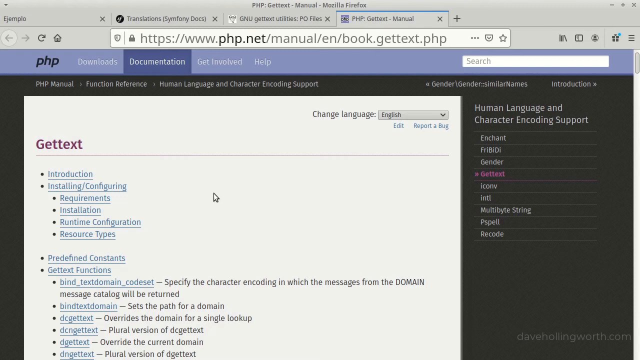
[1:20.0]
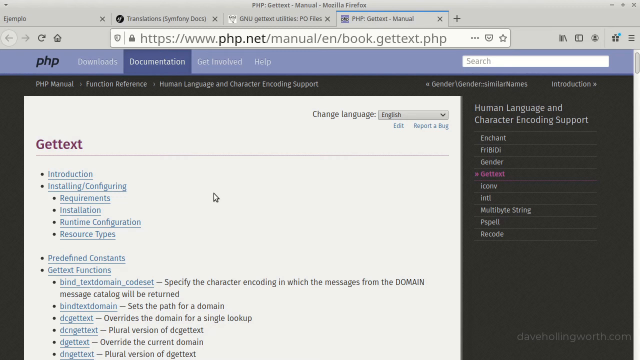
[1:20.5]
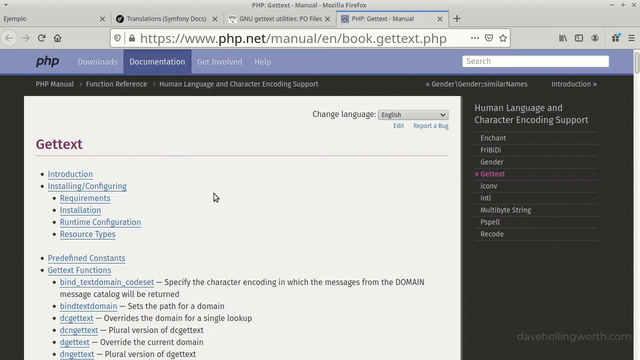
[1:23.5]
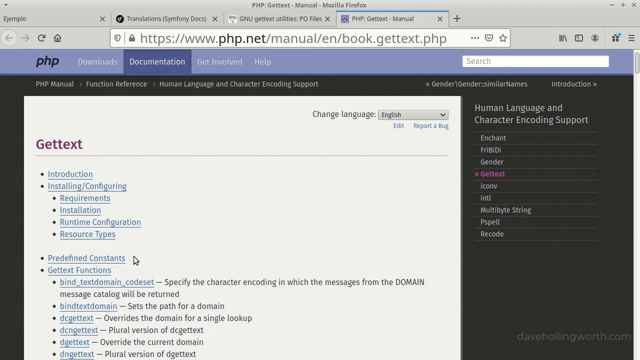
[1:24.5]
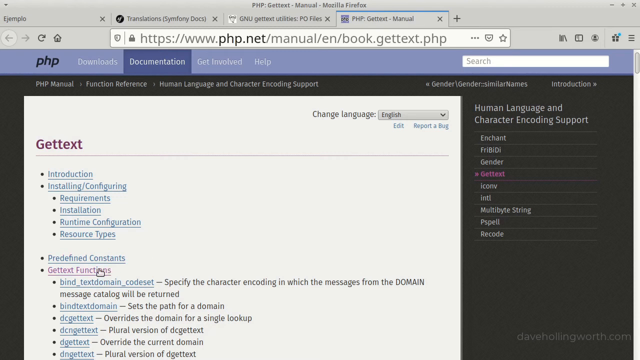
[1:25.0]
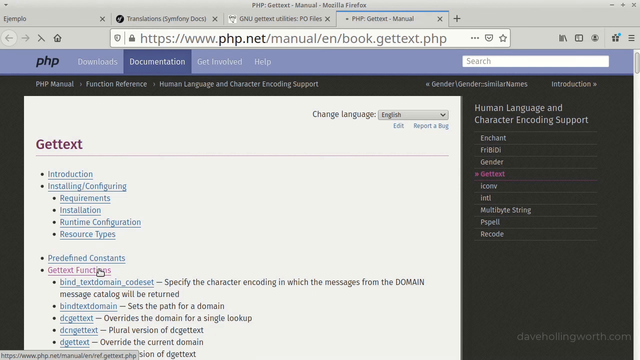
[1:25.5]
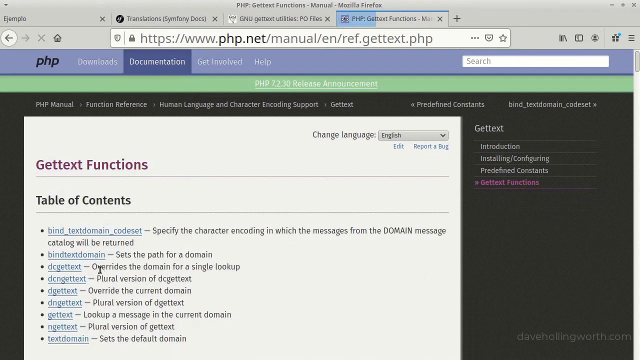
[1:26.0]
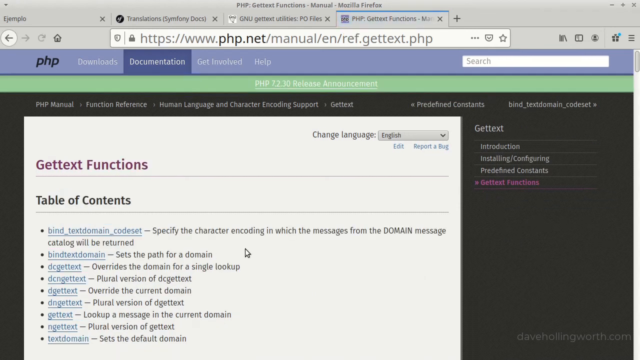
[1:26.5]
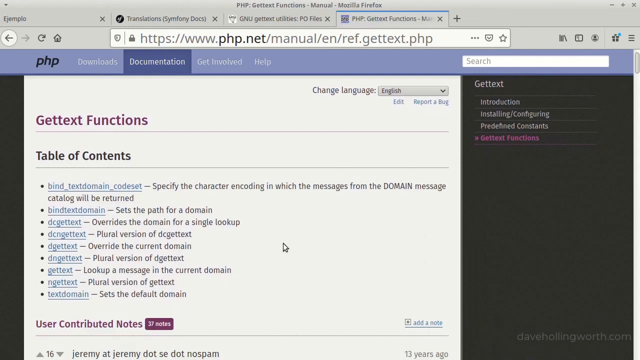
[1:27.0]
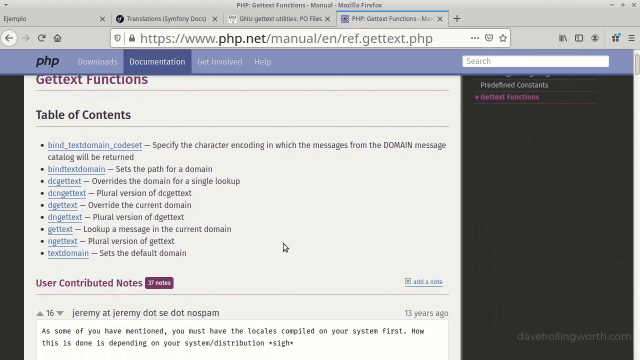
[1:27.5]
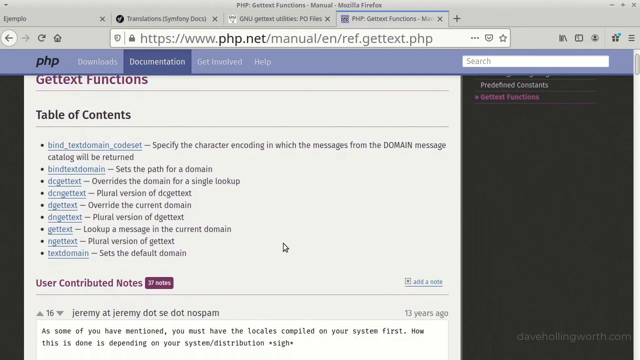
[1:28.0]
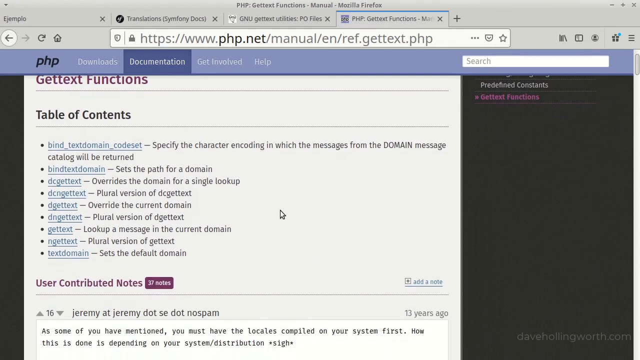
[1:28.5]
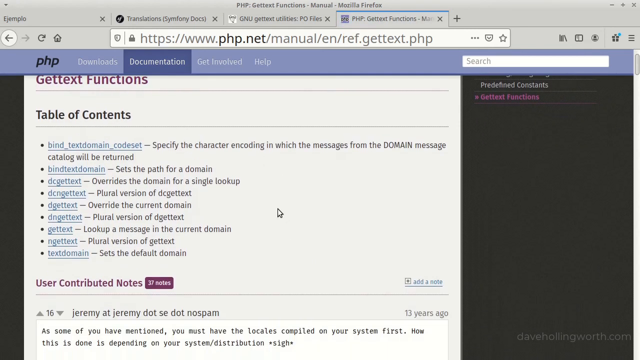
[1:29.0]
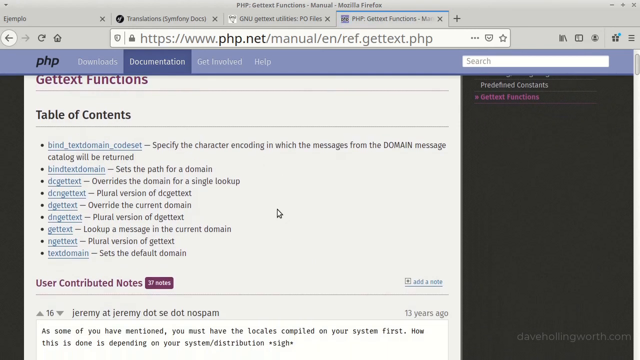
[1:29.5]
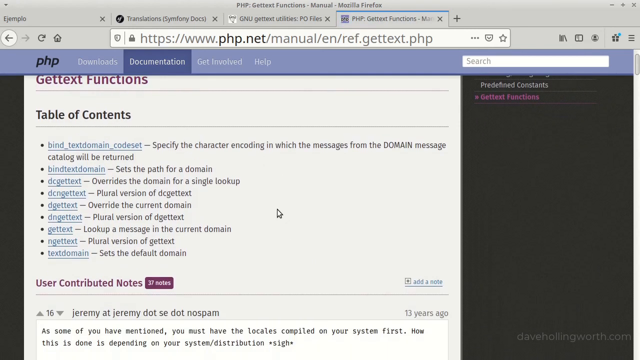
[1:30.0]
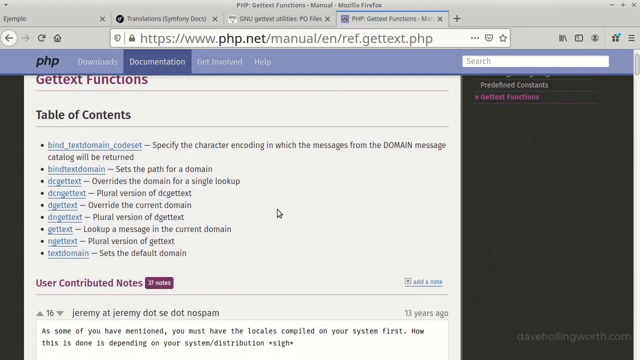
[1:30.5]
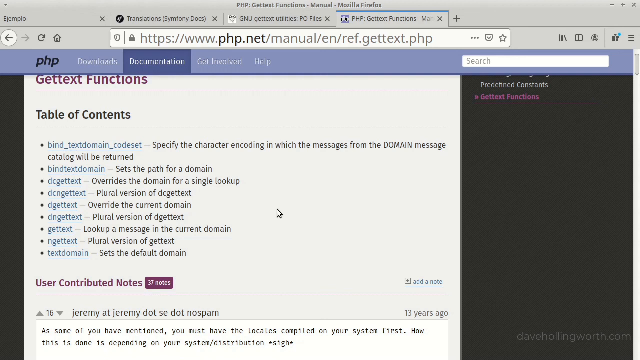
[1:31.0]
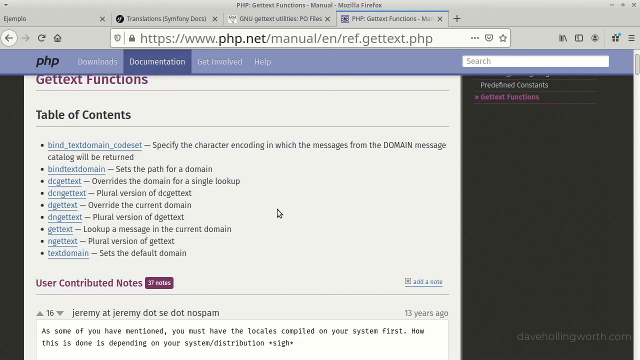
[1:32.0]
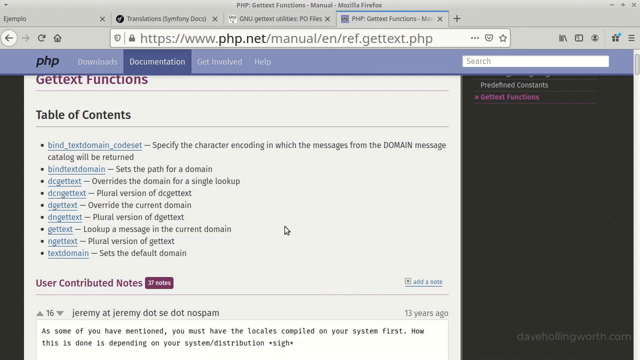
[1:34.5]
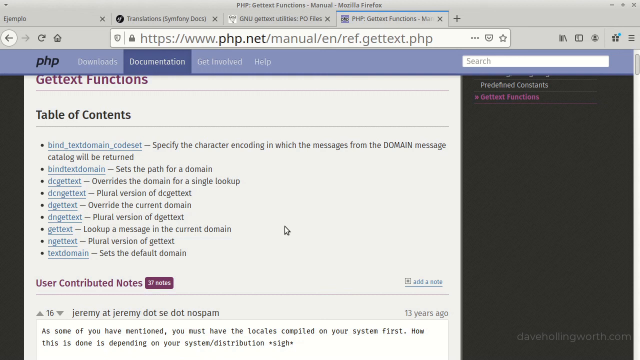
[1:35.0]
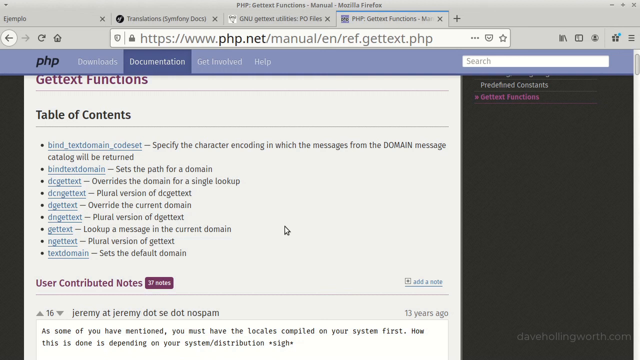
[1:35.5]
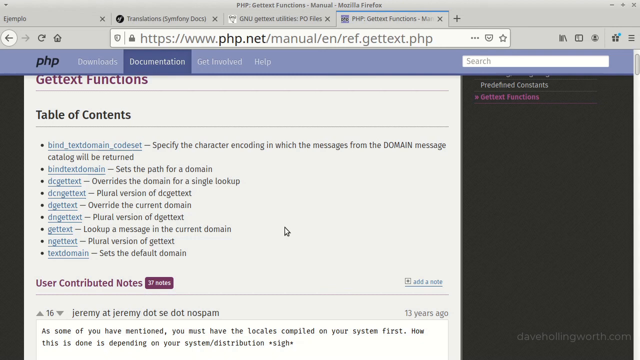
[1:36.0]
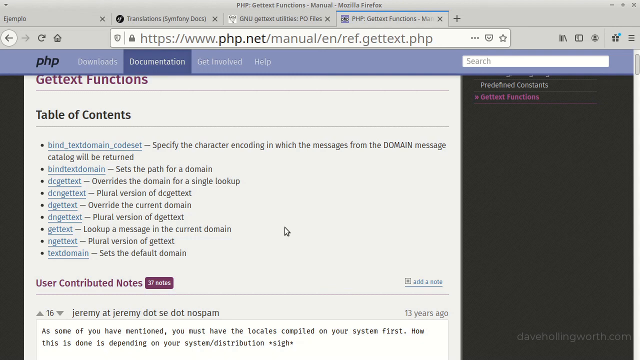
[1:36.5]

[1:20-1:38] The php.net website is still open on the manual for get text, with the library of human language and character coding support items that can be clicked, each explained. The browser then switches to another tab, also php.net, showing the manual for the get text functions, with a table of contents containing many clickable links such as binding text domain, dcg and get texts, each explained. The page scrolls down to the user contributed notes, where other users have left notes. On the right is a list for get text showing introduction, installing/configuring, predefined constants and get text functions; the current page is the get text functions page with its table of contents and user contributed notes.